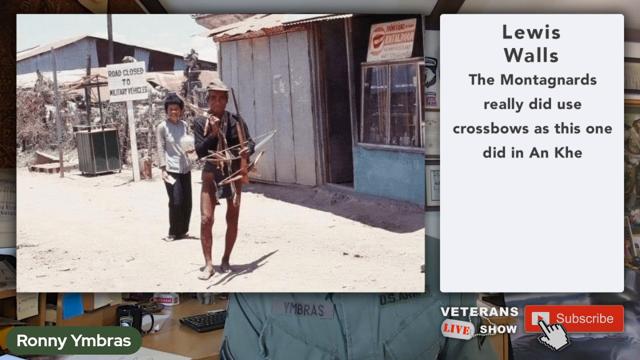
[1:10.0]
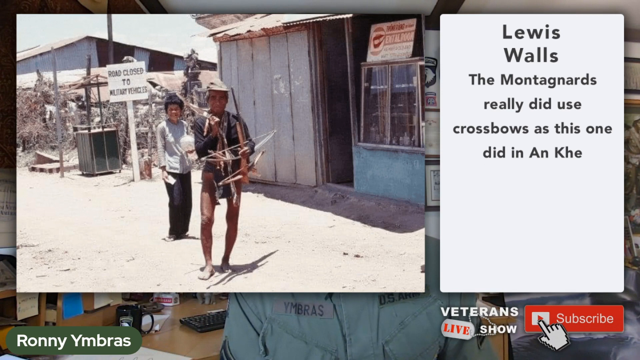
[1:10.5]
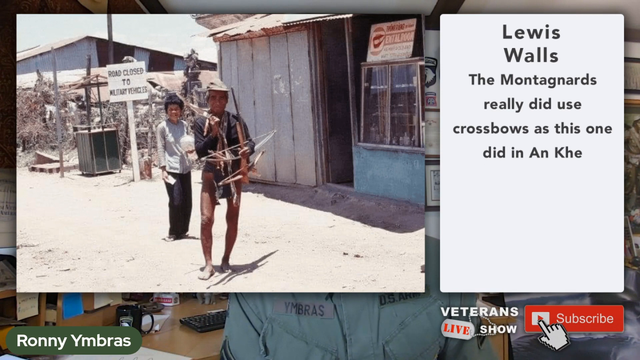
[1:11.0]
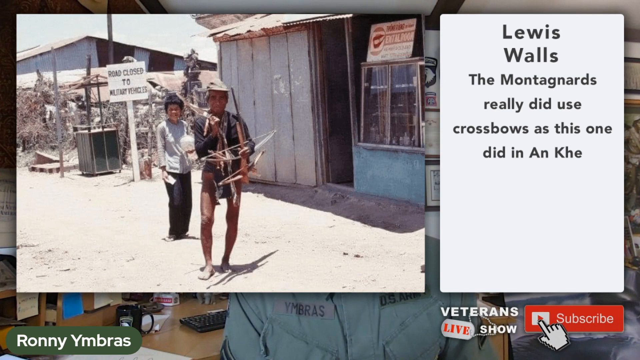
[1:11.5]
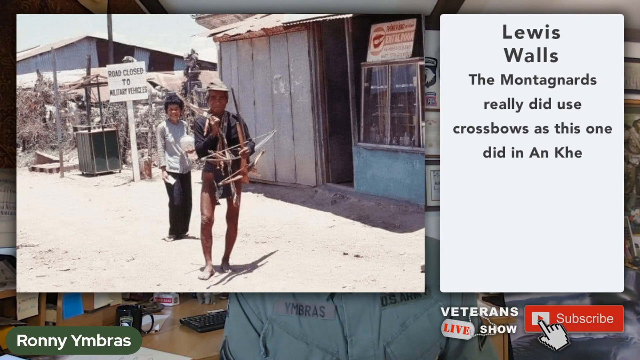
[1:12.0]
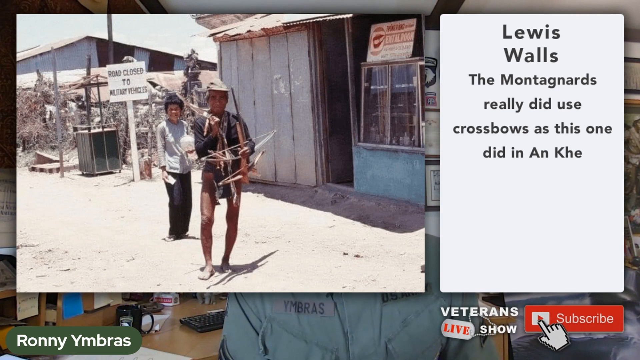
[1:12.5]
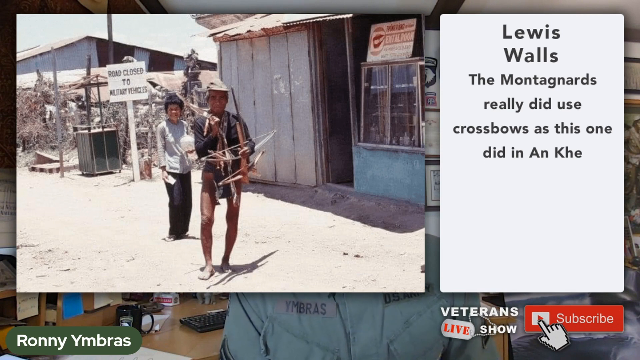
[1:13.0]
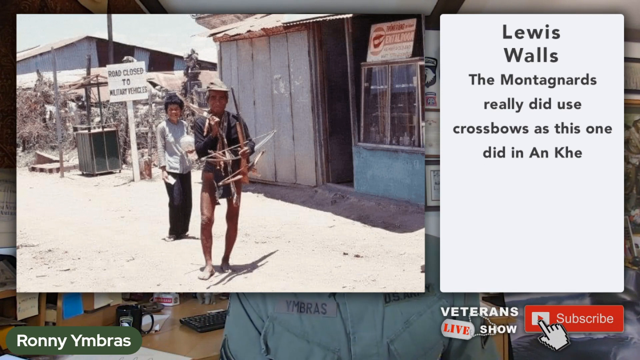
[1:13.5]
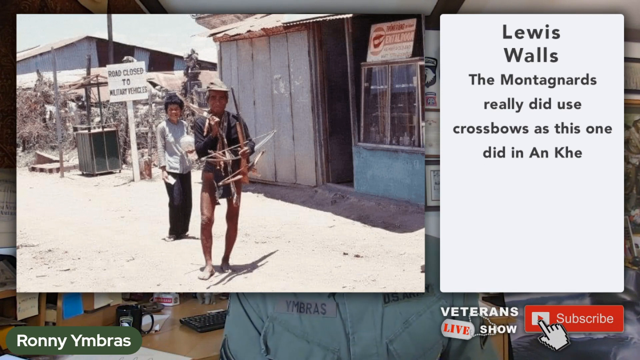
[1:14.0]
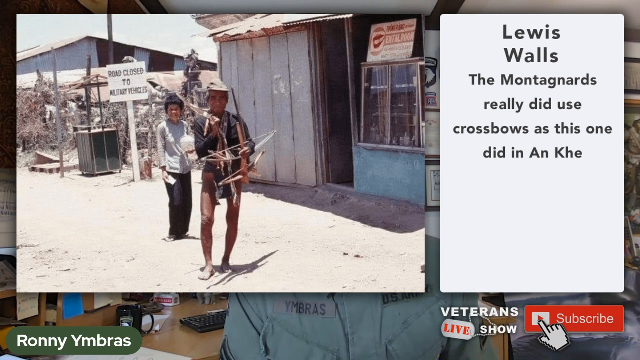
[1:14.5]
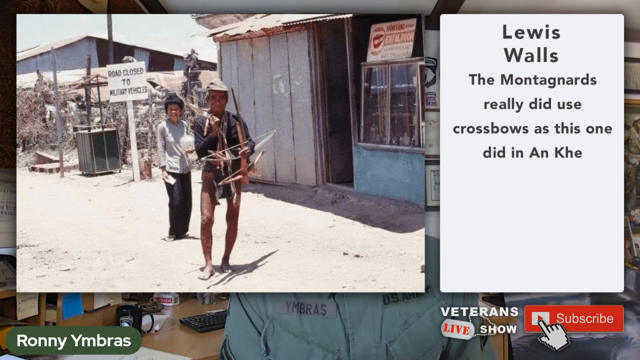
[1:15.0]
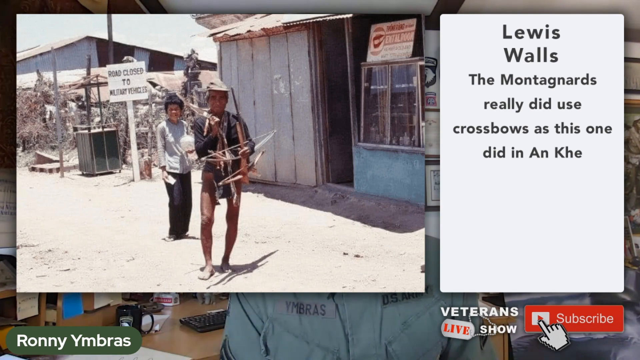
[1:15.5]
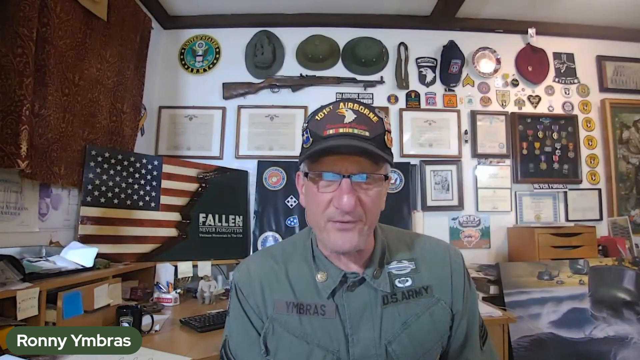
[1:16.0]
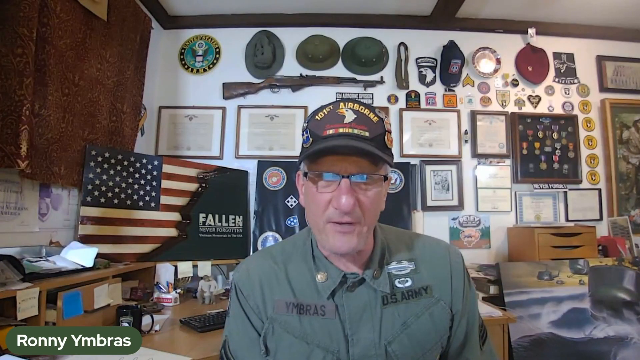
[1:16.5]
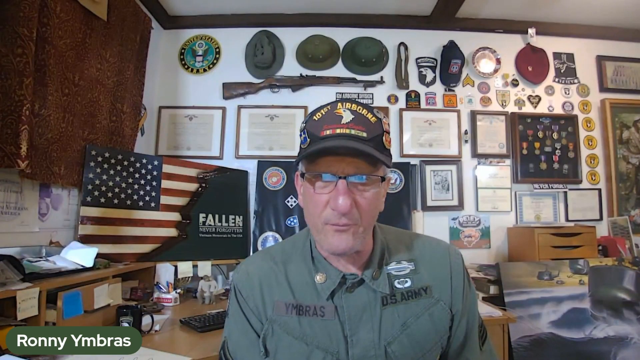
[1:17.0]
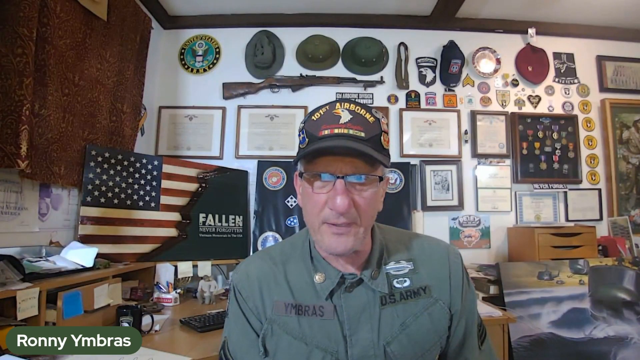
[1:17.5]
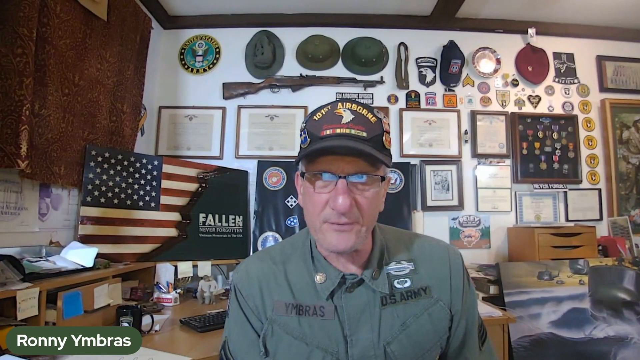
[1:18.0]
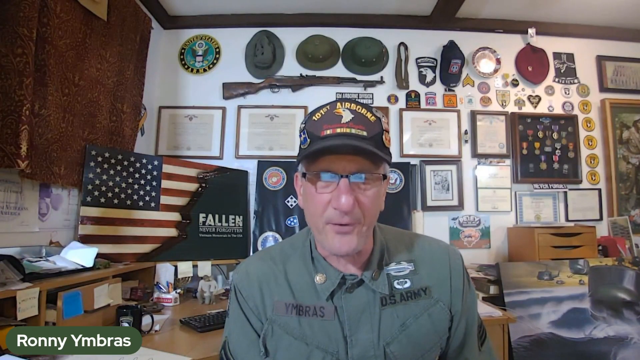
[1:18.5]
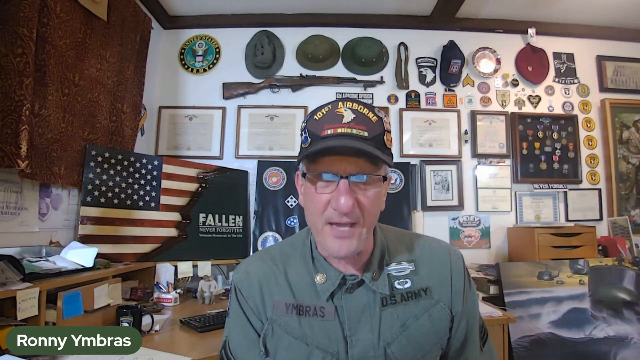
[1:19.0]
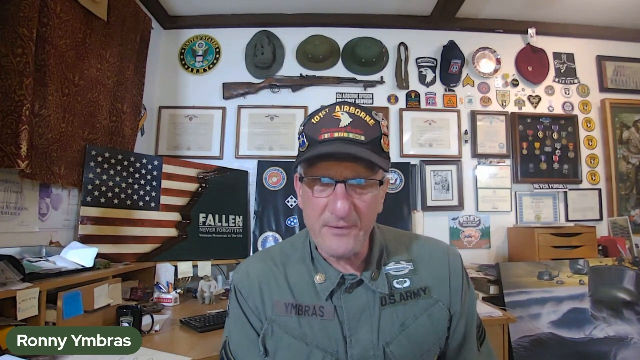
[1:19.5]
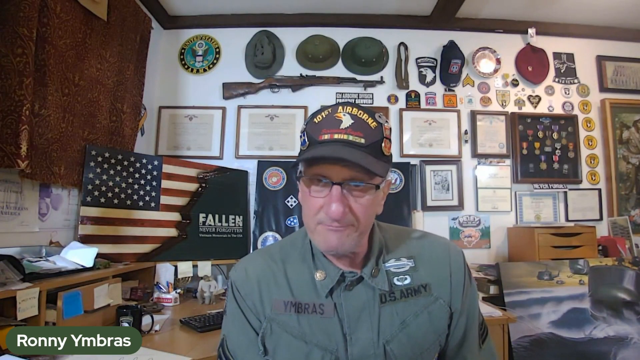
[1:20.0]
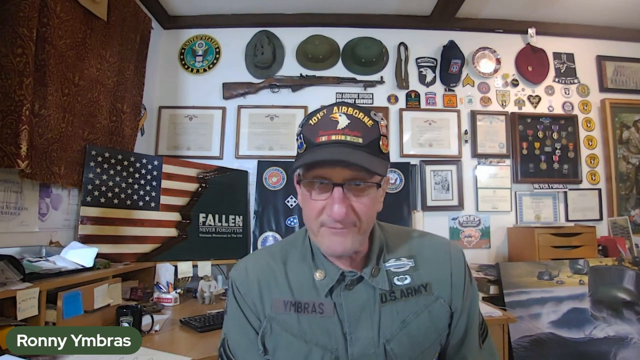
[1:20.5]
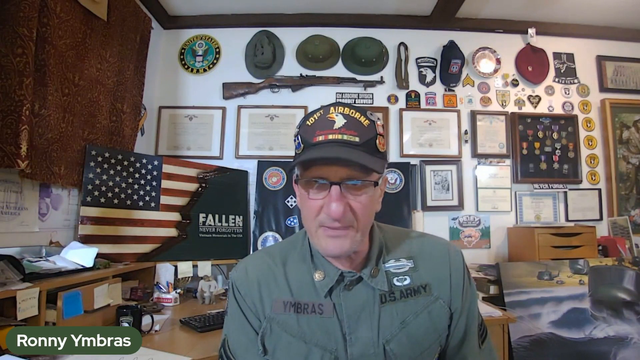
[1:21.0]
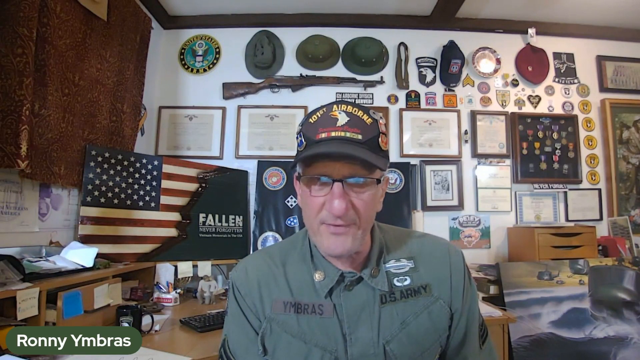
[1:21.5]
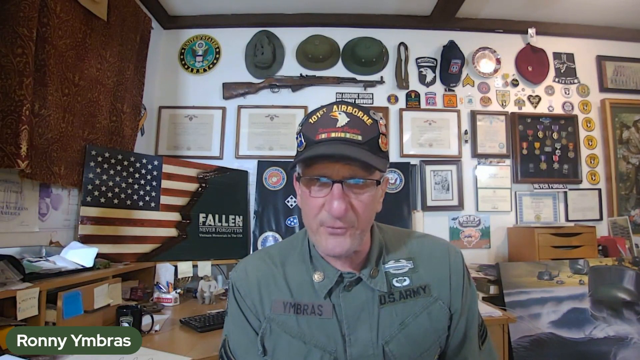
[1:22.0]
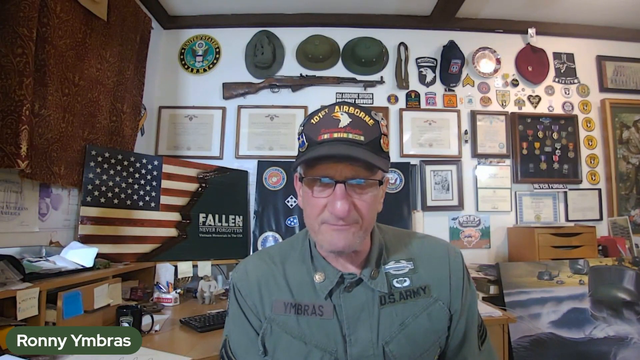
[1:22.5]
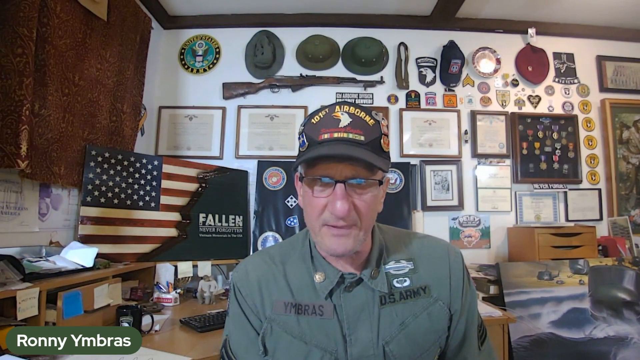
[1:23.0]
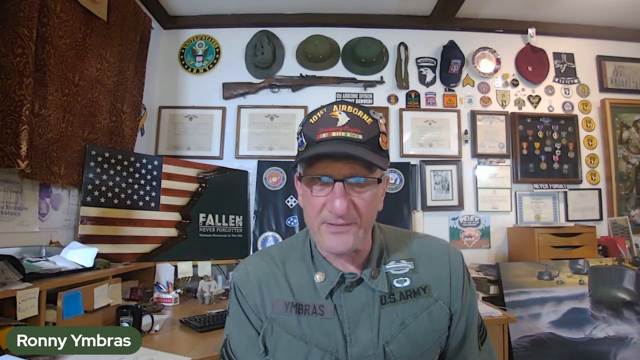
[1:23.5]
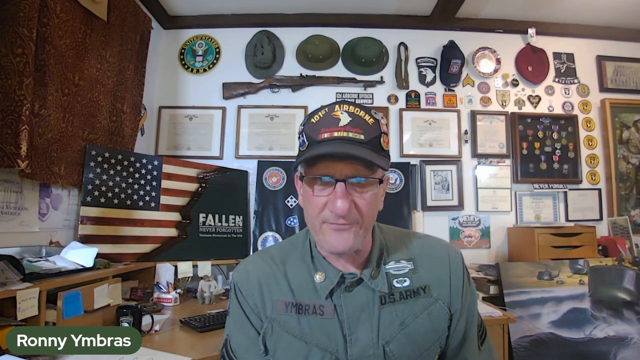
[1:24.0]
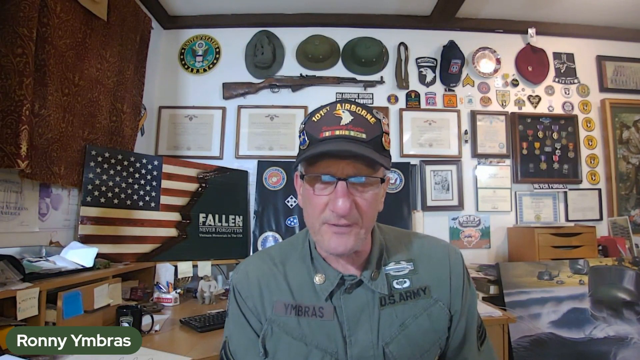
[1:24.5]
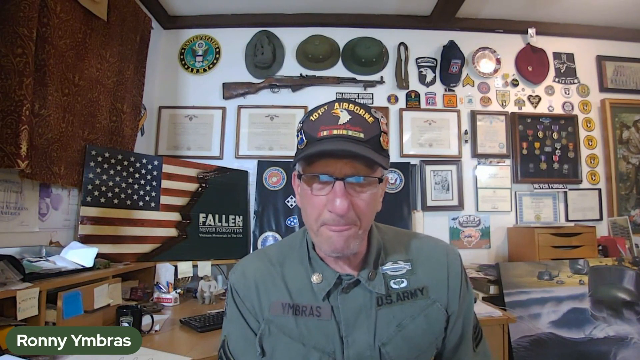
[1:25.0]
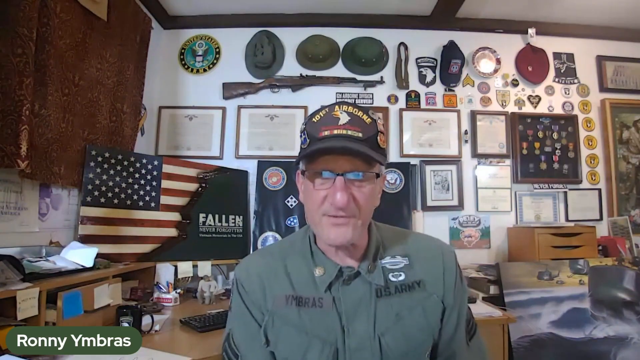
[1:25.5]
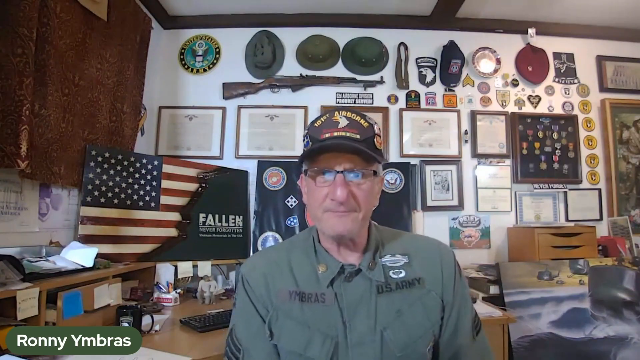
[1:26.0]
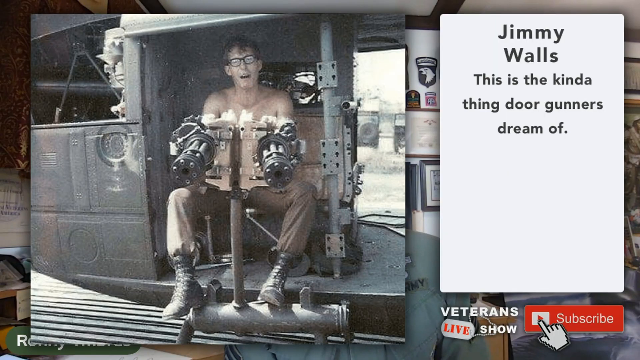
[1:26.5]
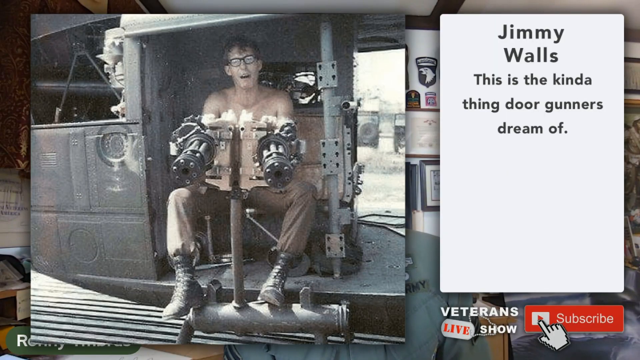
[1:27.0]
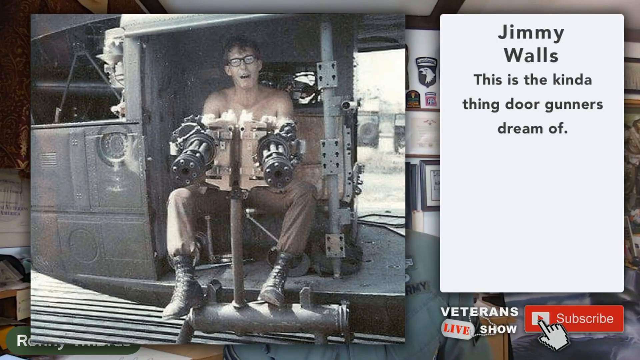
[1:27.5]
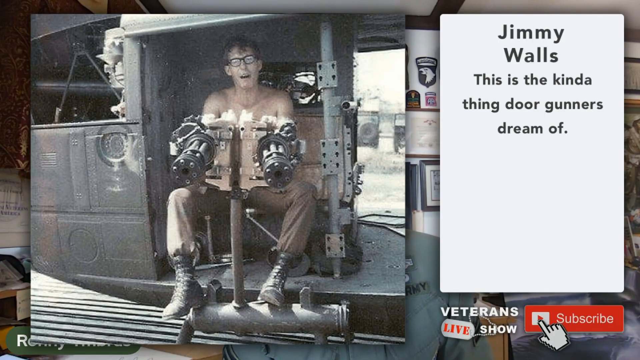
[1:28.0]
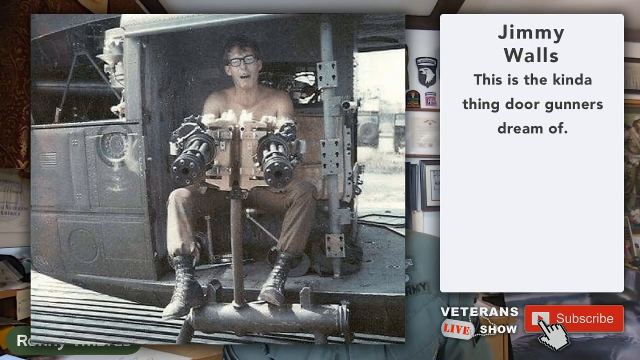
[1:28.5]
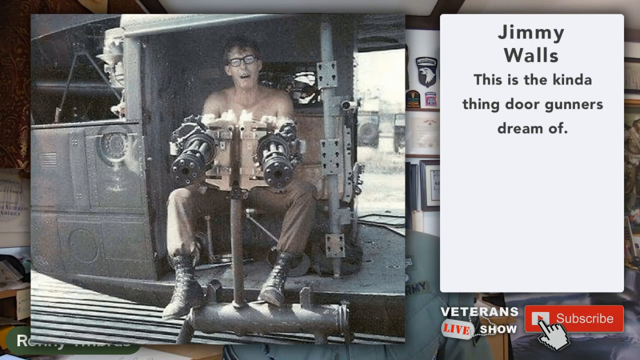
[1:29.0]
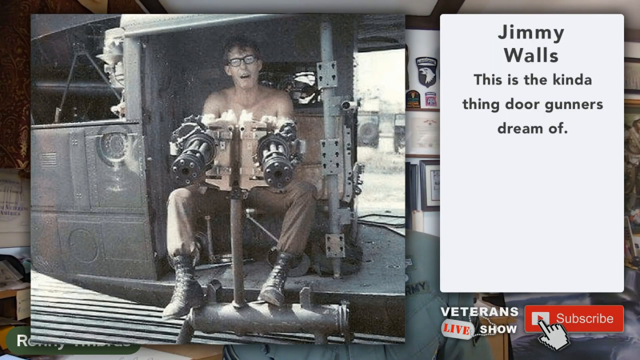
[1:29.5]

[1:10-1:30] The Vietnam veteran from the Army, Ronnie Yumbras, is in the background, talking about the Lewis Walls picture. The picture shows a dirt area with a couple of buildings, kind of a desert setting. The Montagnard holds the crossbow; he is standing in shorts, a shirt and a hat, looking at the camera with somewhat of a smile, and does not look like he is going to shoot. Behind him is a Vietnamese woman in long black pants and a long-sleeved, lighter bluish-gray shirt. She holds something white in her right hand and also looks at the camera, somewhat smiling and squinting, apparently because the sun is very bright. Ronnie, who is from the 101st Airborne, is seen again, sitting at what may be a desk with a computer. The wall behind him is decorated with hats, guns, certificates and medals. He has glasses on. Then a picture from Jimmy Walls appears.